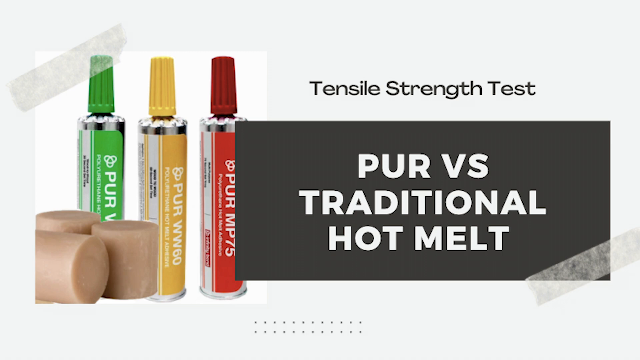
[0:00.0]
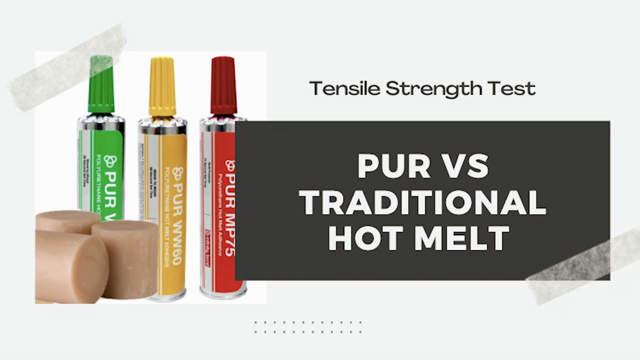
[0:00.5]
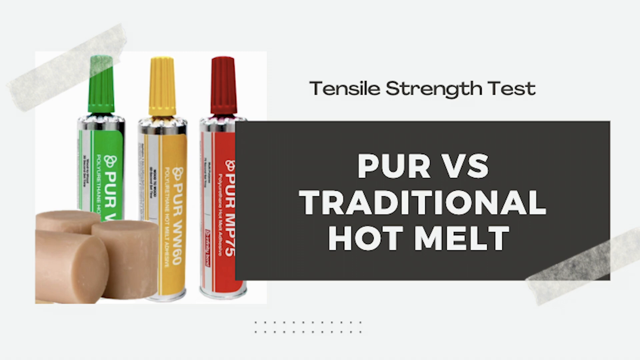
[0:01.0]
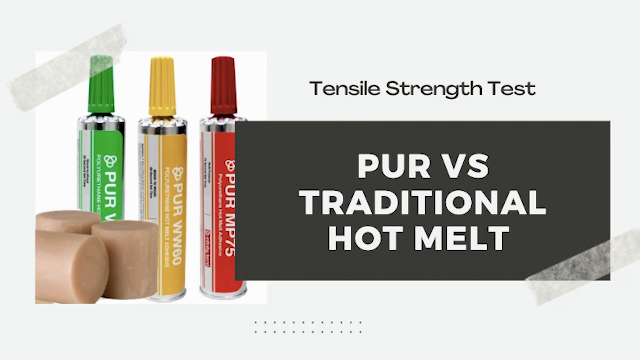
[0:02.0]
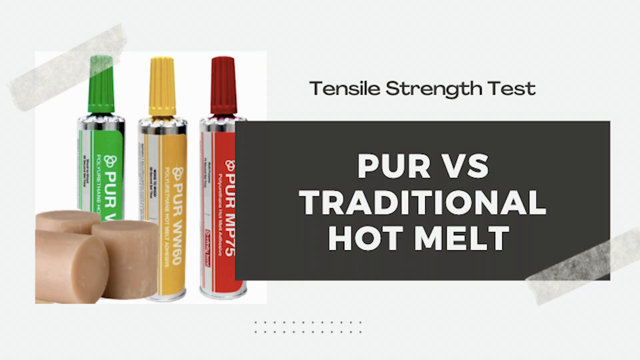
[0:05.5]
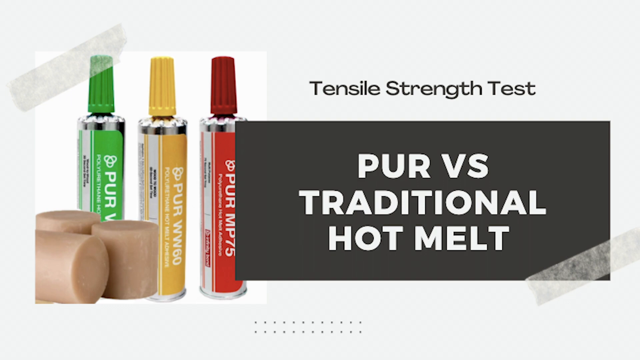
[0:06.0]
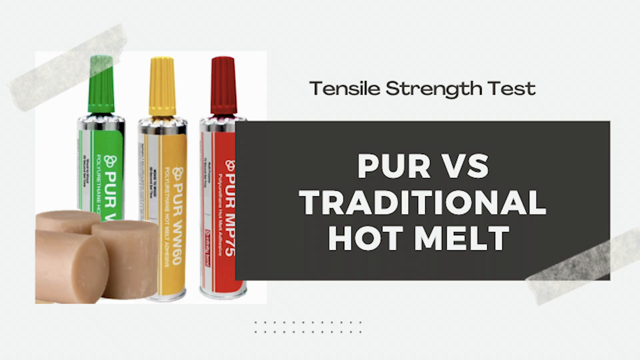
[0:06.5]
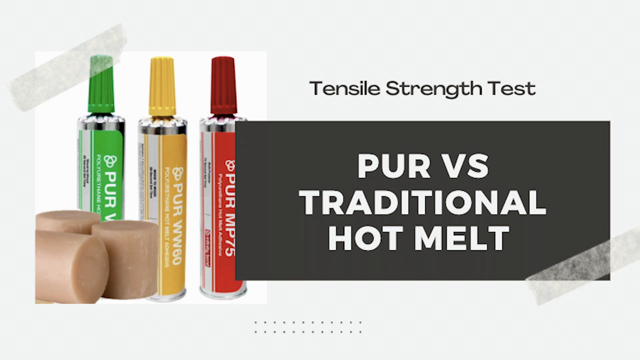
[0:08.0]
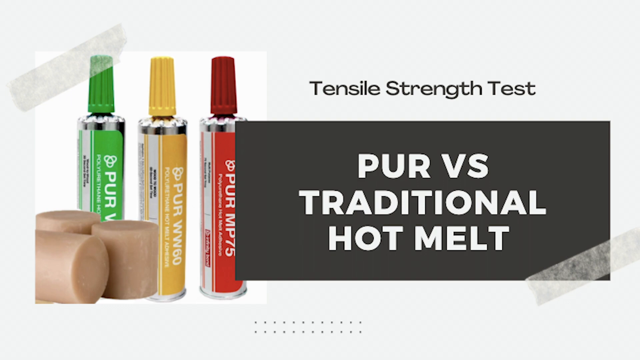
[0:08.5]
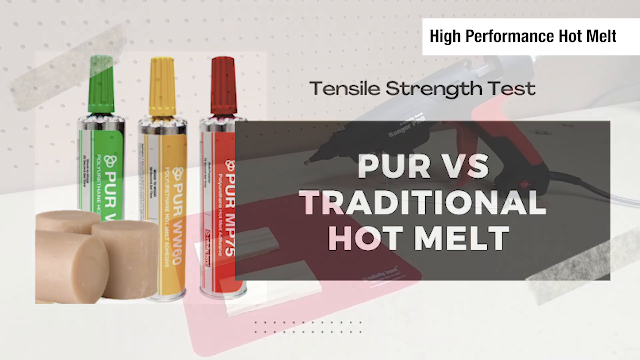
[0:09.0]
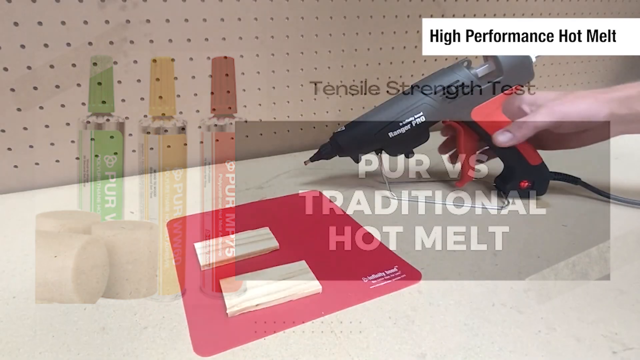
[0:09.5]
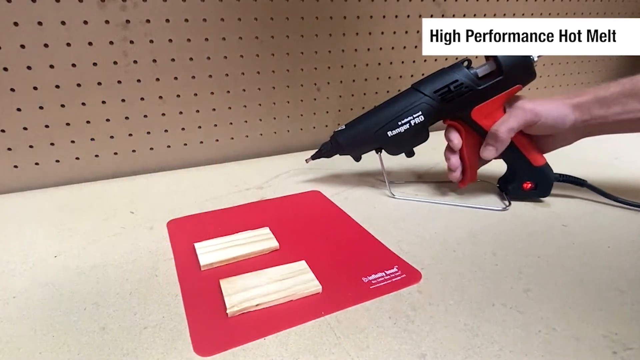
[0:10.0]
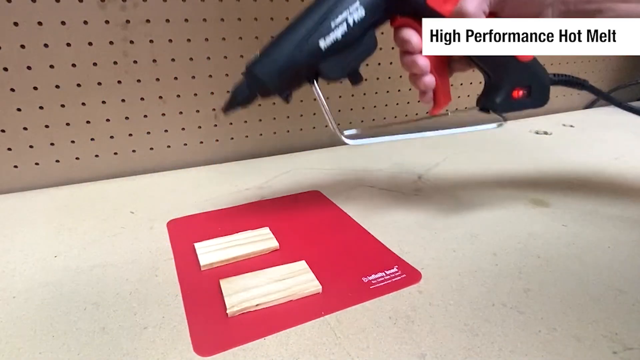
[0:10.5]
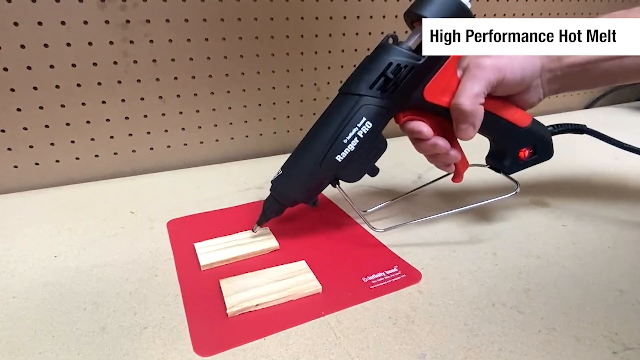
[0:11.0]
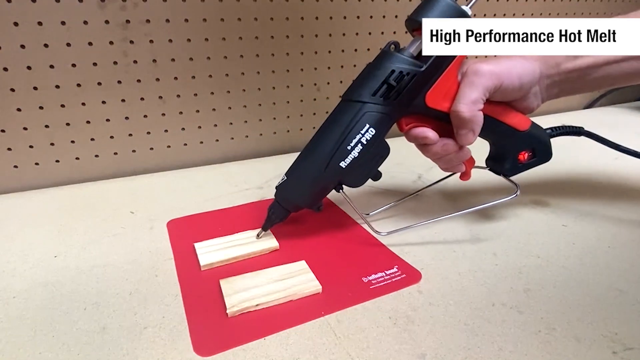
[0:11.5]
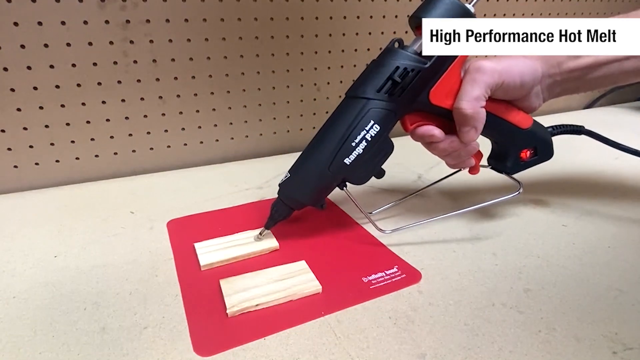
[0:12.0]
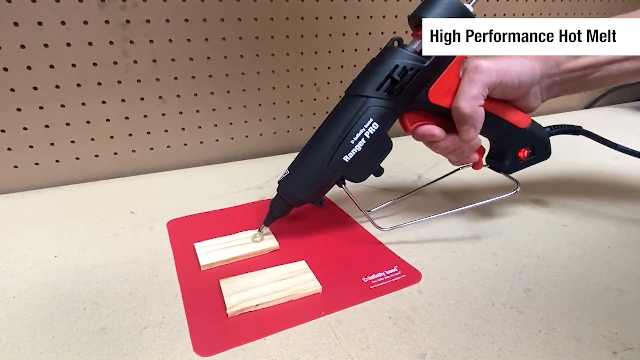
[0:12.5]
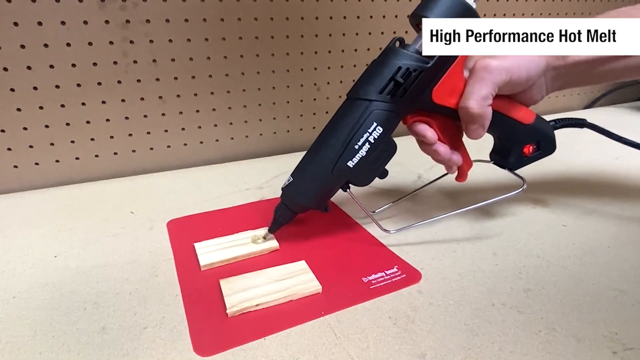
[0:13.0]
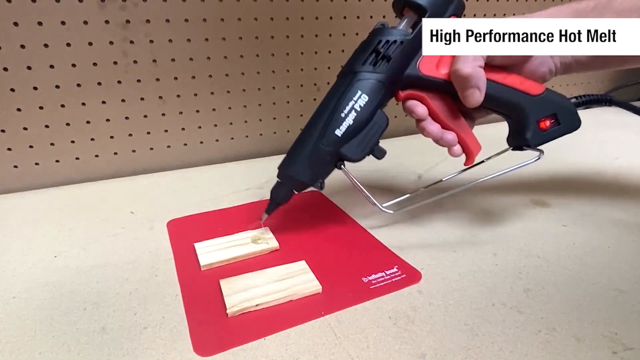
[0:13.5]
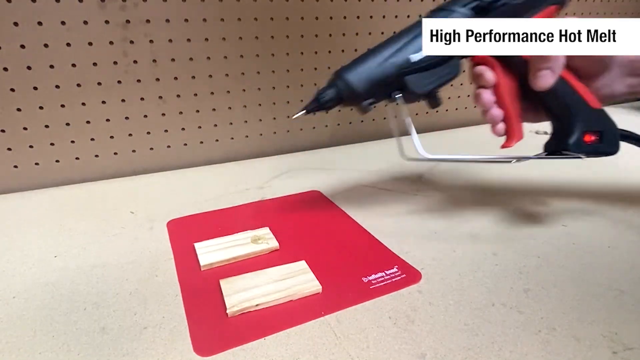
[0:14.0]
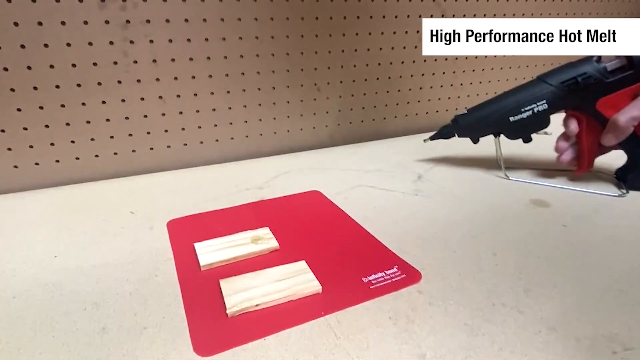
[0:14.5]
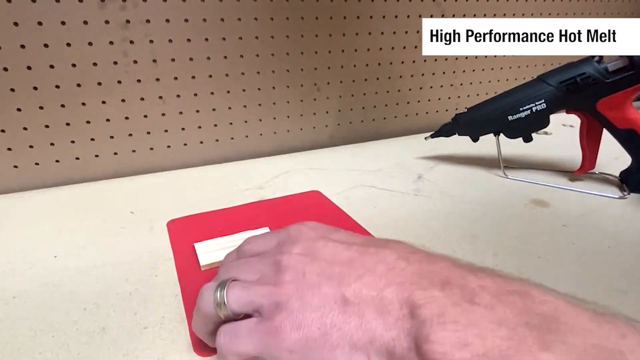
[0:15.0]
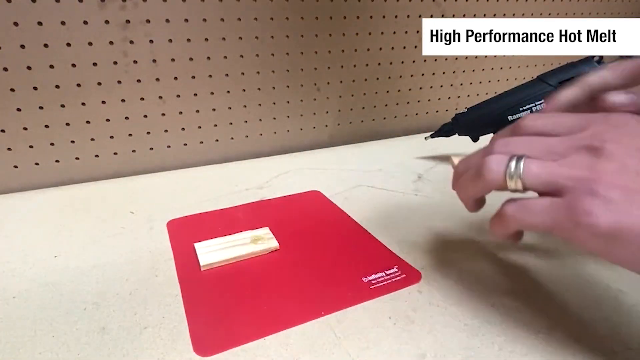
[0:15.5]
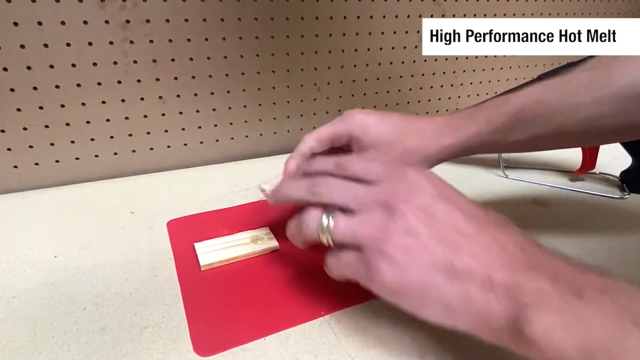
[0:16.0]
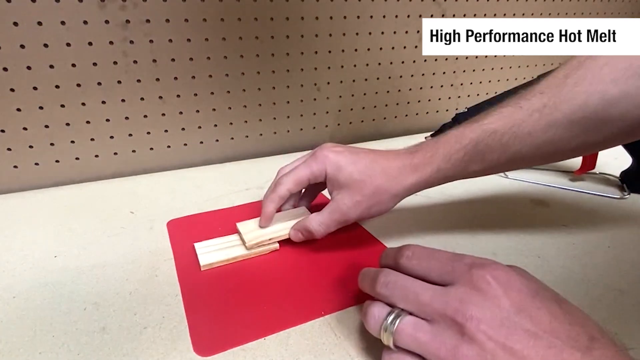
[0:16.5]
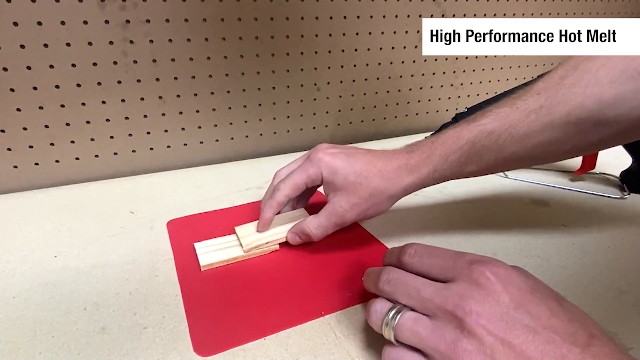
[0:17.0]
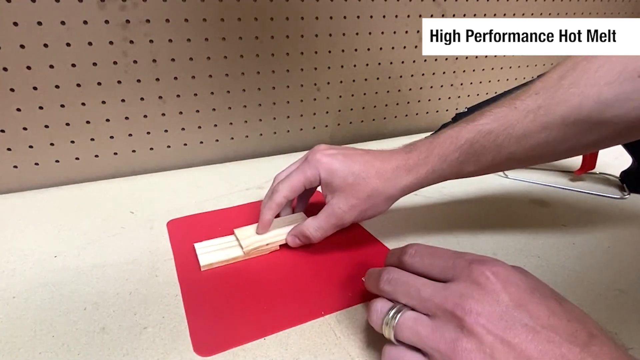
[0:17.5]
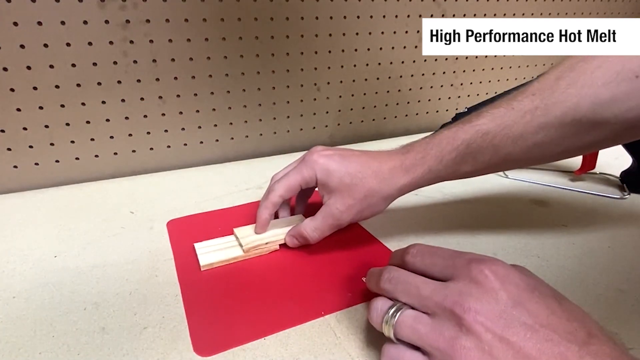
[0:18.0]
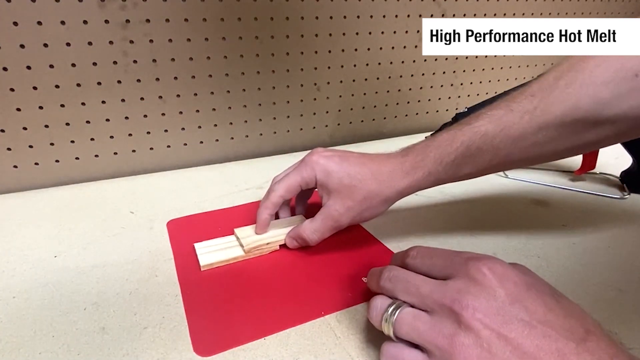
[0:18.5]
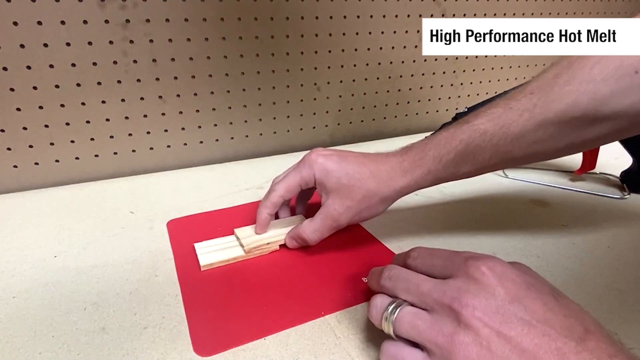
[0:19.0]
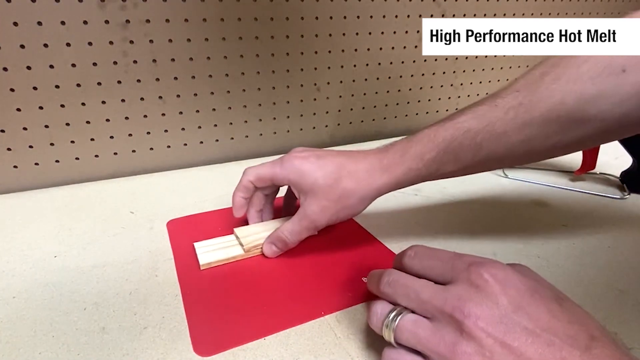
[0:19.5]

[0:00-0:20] A title slide shows three tubes of a commercial product, with the title "tensile strength test". In a text box against a grey background, white capital letters read "PUR versus traditional hot melt". Each tube is labelled with white text reading "PUR", but the three have different colours and product names: the red one is MP75, the yellow one is WW00, and the green one is obscured in the photograph by three cylindrical foam shapes. Next, a person holds a hot glue gun at a workbench with a small red mat and two thin rectangular pieces of wood. The hand squeezes the gun to deliver a spot of glue at one end of one wooden piece, puts the gun down, picks up the piece without glue and places it on top of the glue so the two pieces form a staggered, step-like shape.